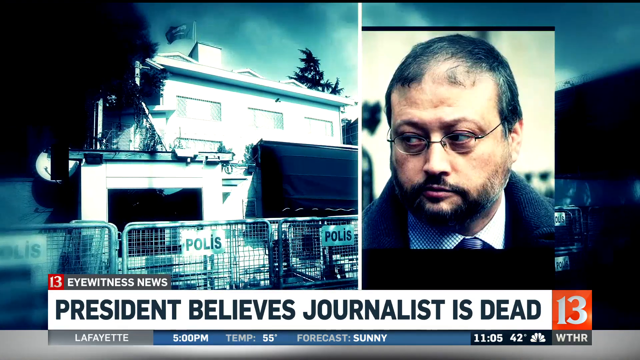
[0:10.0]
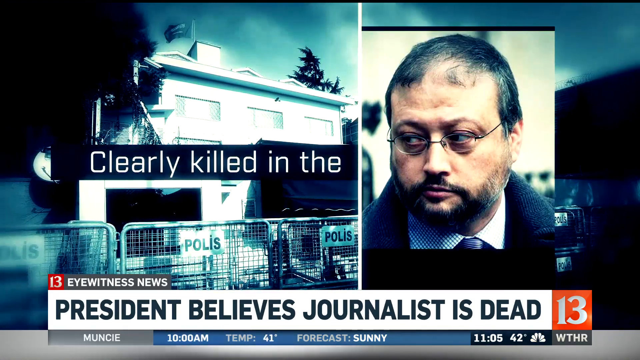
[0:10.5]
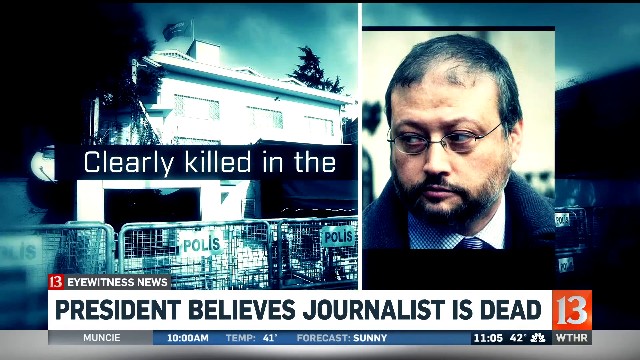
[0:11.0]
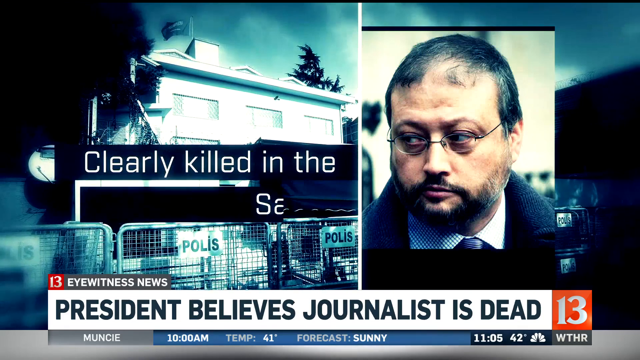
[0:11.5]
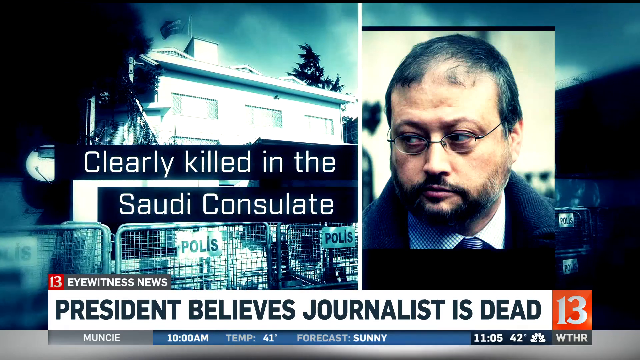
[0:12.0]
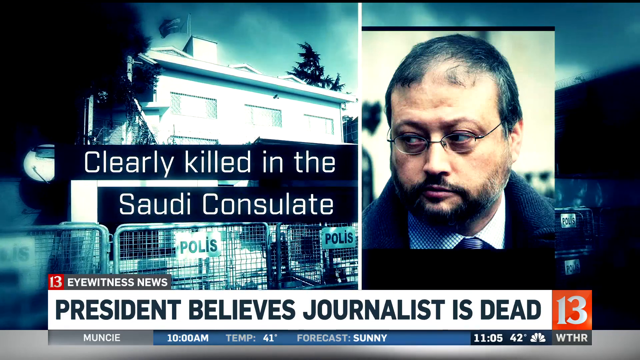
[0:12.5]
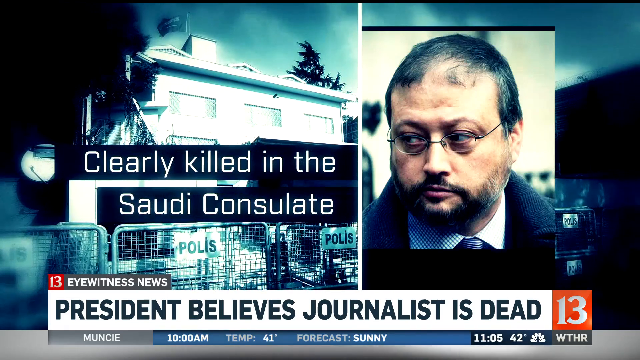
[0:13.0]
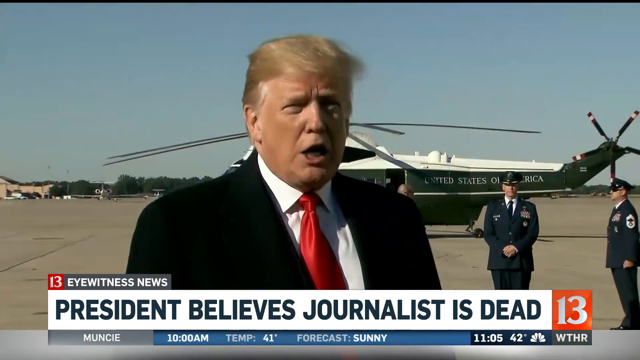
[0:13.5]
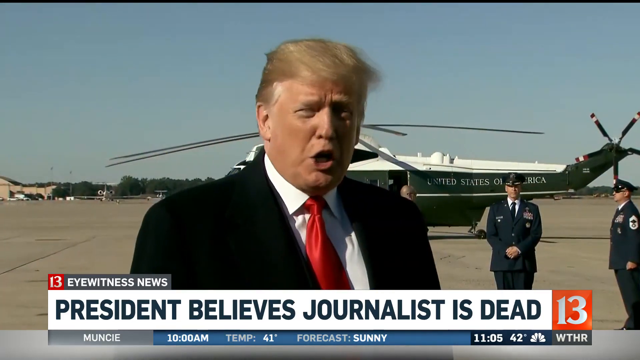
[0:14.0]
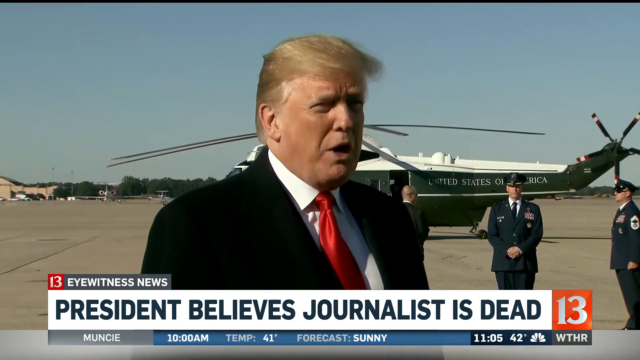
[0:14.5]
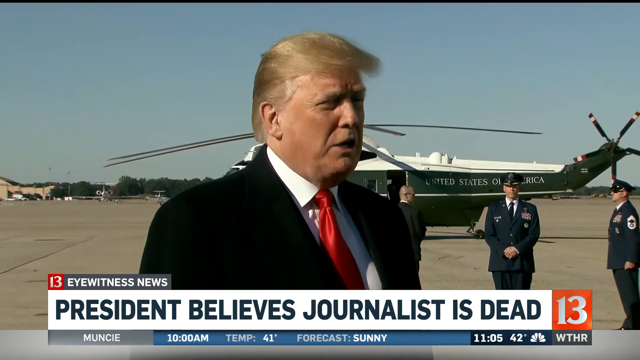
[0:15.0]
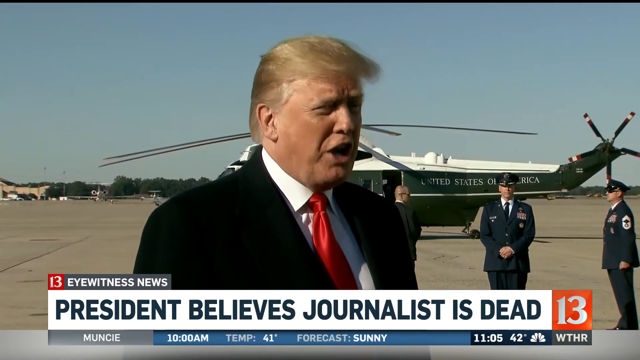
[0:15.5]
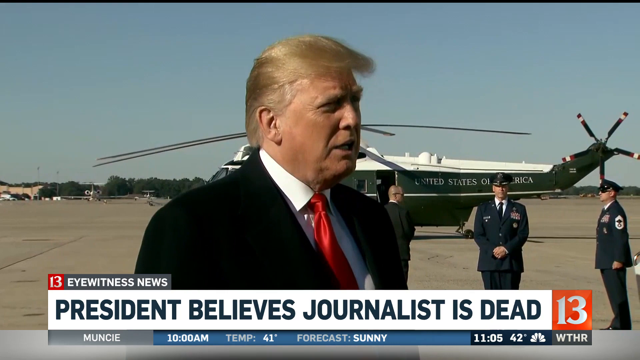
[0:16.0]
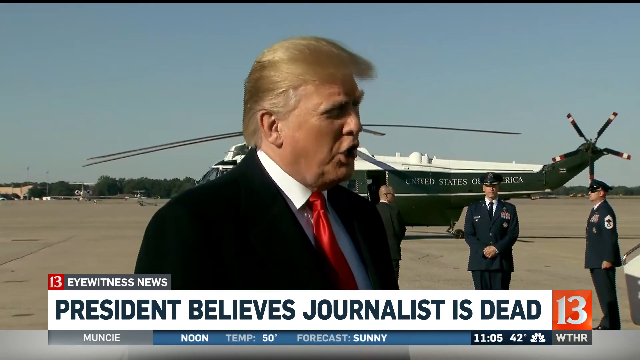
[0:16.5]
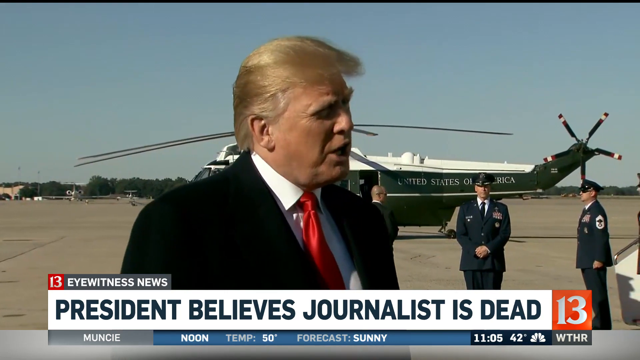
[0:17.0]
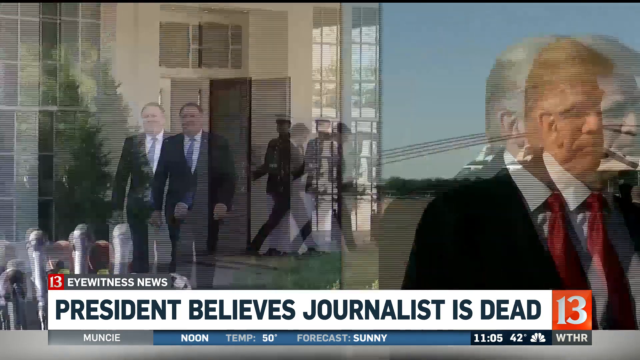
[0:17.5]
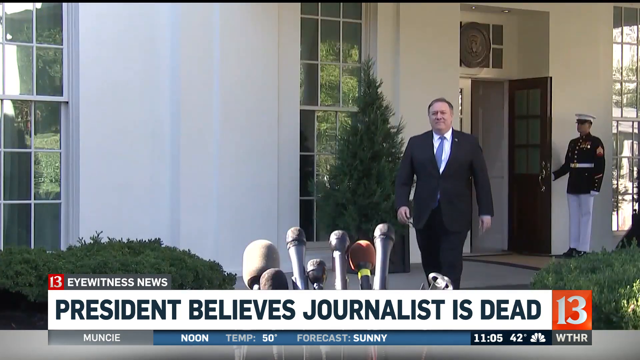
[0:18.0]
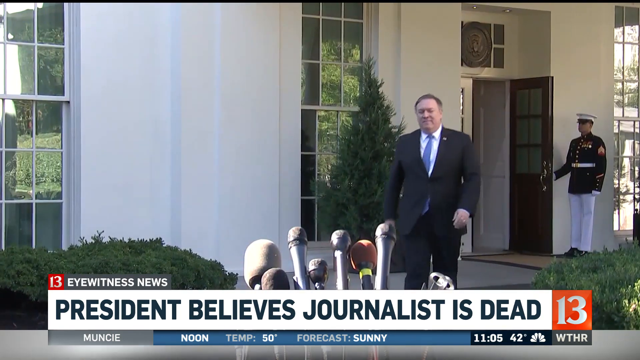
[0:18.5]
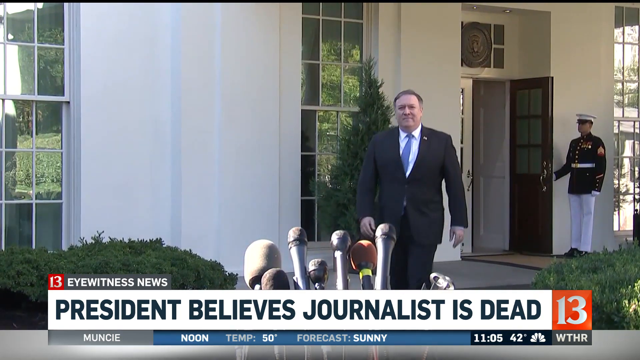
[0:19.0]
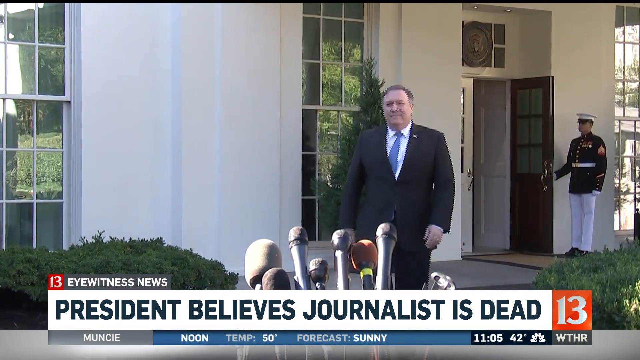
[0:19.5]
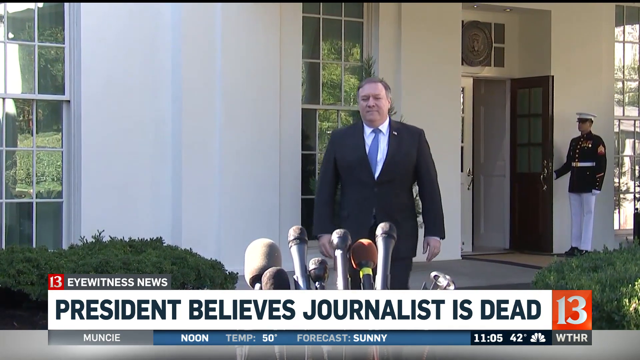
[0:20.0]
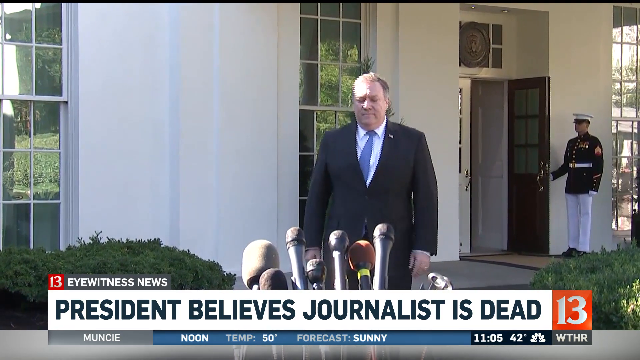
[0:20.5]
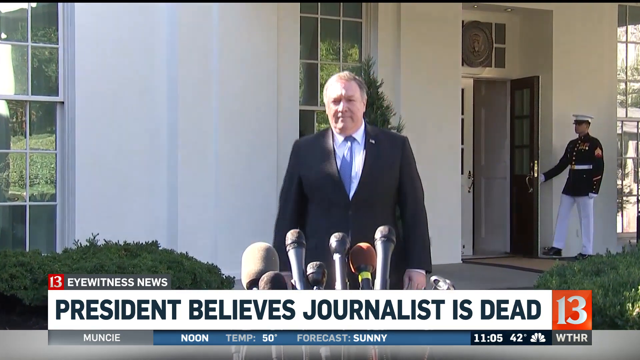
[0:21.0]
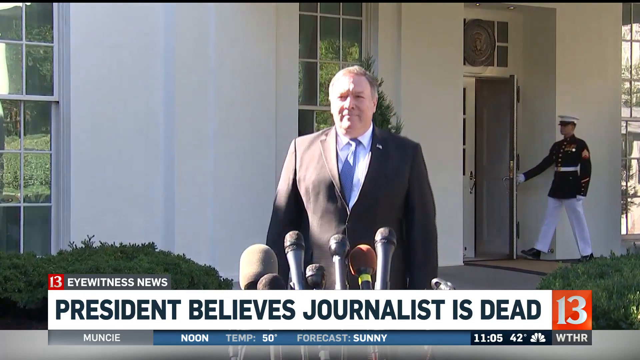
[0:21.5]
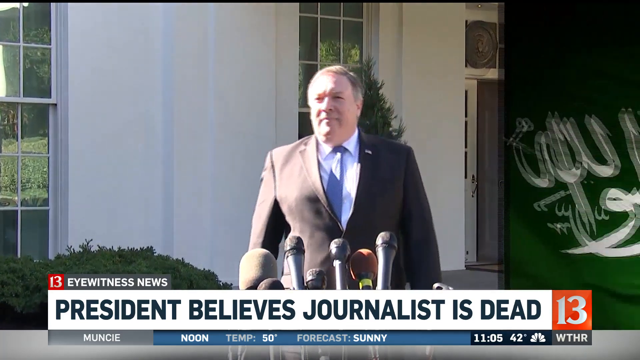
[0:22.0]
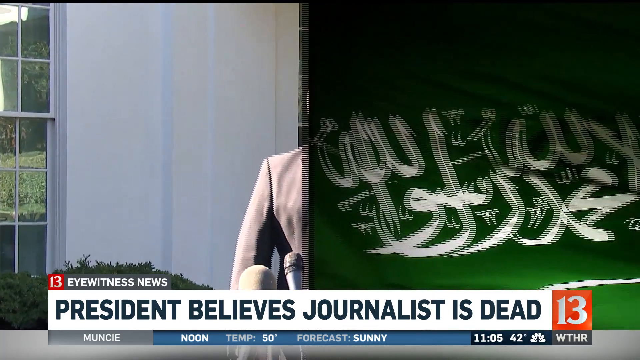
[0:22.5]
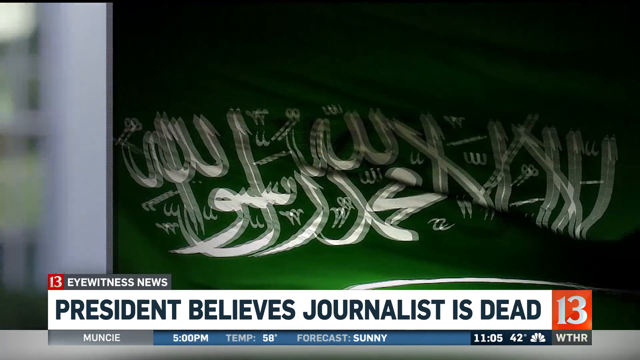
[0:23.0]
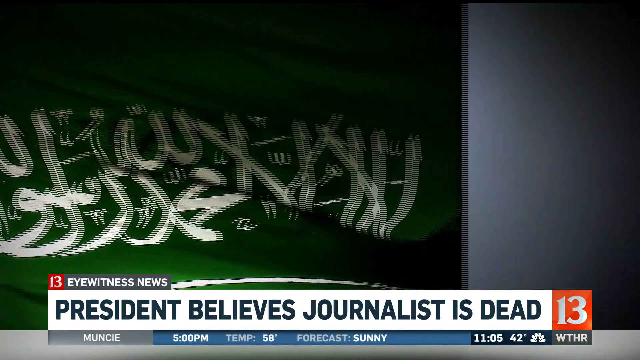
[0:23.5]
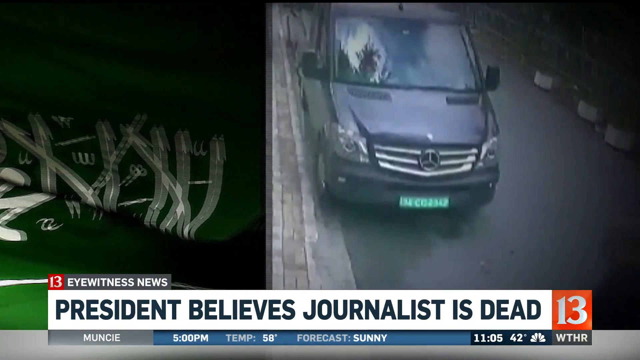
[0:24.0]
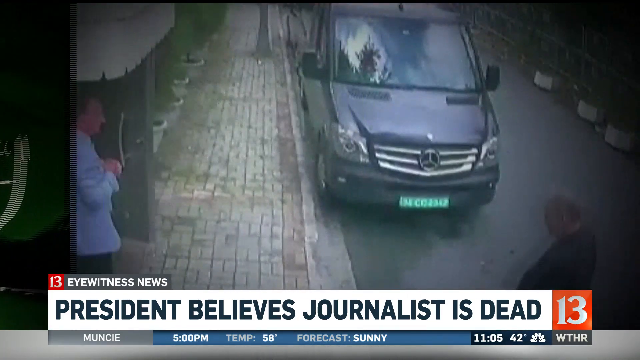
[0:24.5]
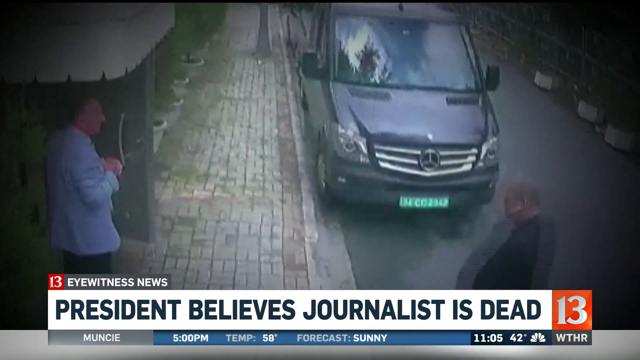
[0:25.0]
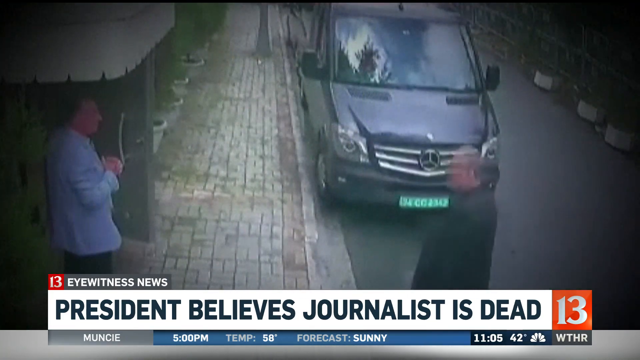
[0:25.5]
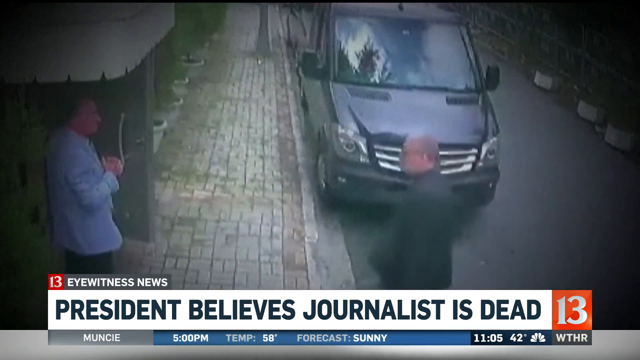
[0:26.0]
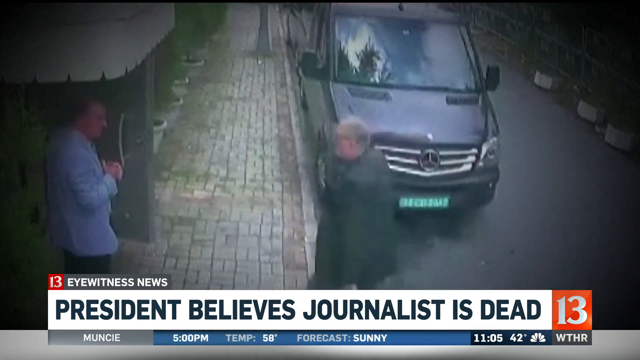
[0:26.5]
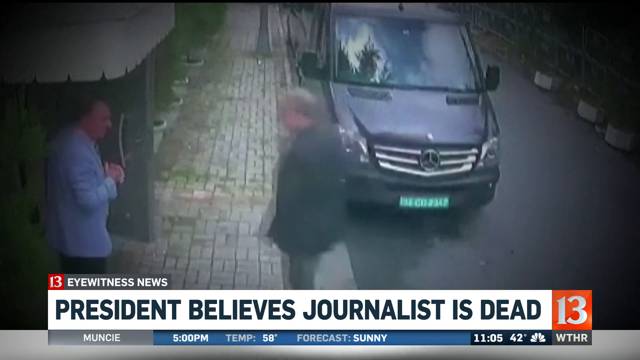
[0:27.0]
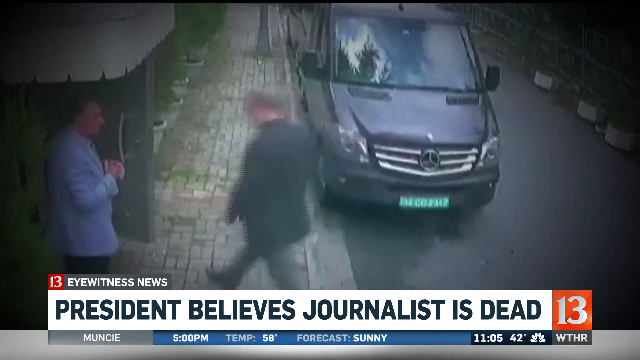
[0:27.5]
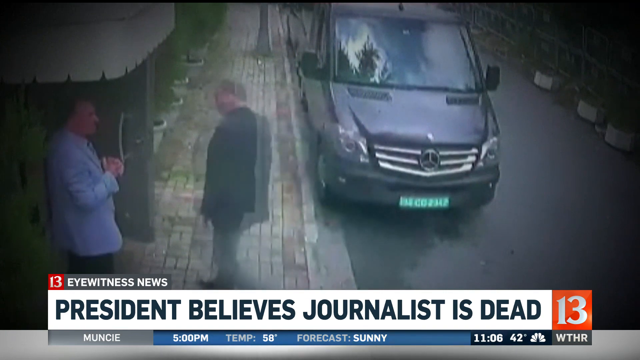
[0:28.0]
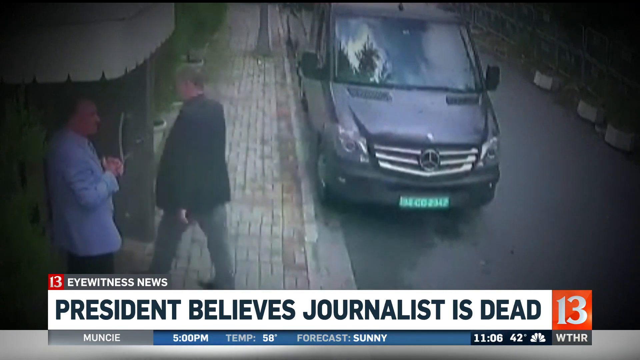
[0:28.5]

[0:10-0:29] A caption on the screen is titled "president believes journalist is dead," with the 13 Eyewitness News logo above it. The graphic shows a tan-skinned man with dark hair, a round face, a beard and prescription glasses. To the left, writing appears on the screen with the words "clearly killed in the Saudi consulate." The screen then transitions to President Donald Trump speaking to a camera in front of a helicopter with the words "United States of America" written on it, while three men in military uniforms stand behind him. Next comes a picture of an older man with grayish dark hair and a suit walking towards a press conference podium. Finally, surveillance footage shows a man walking into a building while another man stands outside the door of the building.